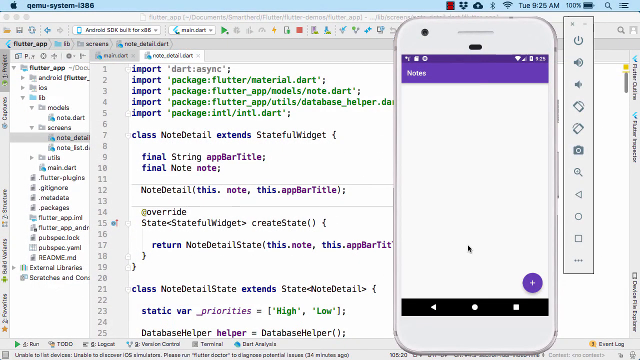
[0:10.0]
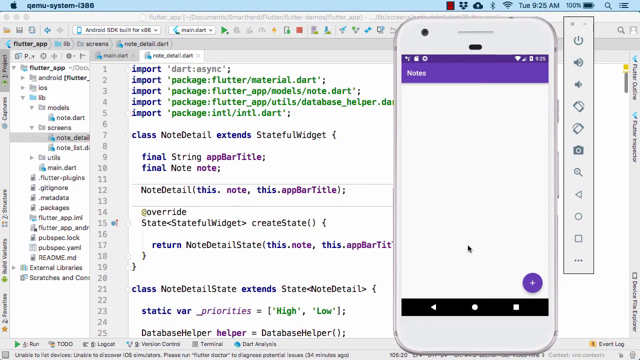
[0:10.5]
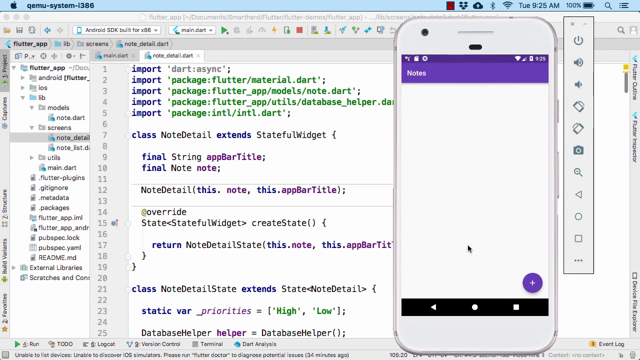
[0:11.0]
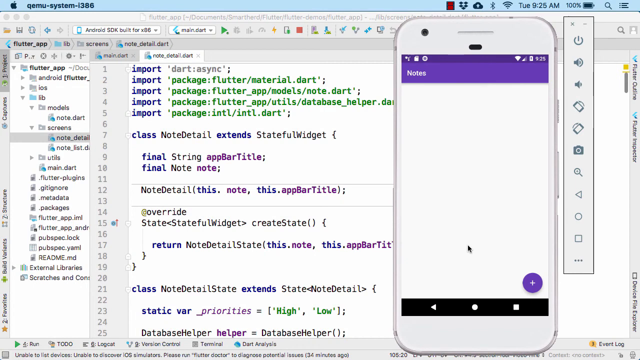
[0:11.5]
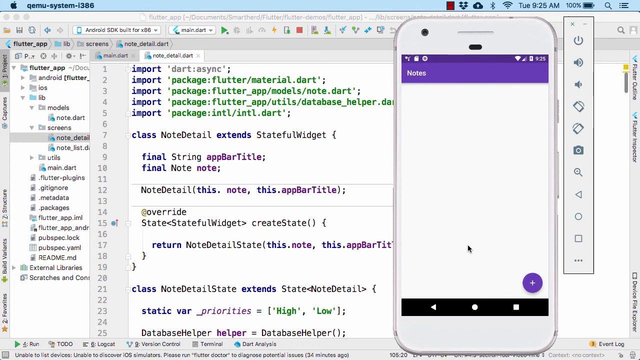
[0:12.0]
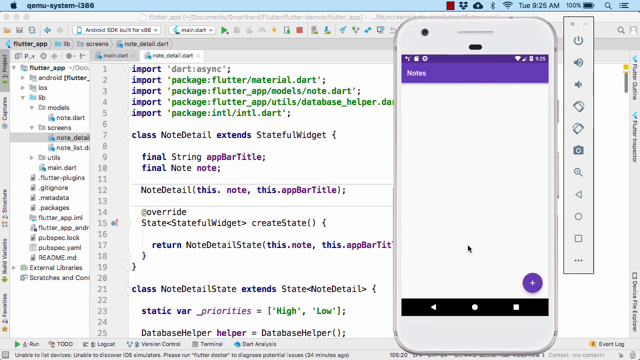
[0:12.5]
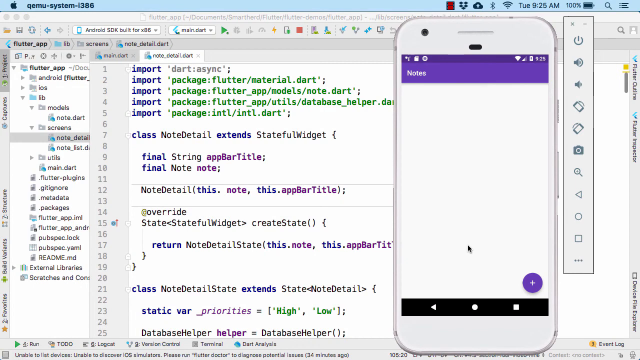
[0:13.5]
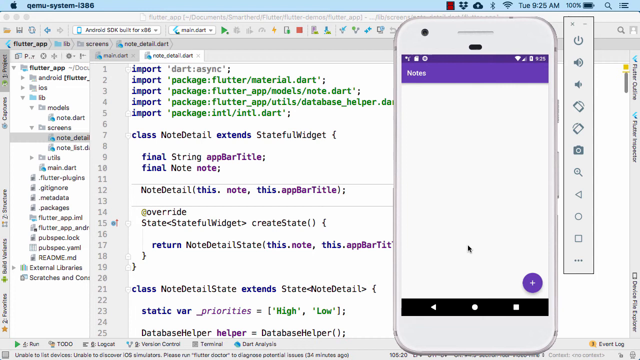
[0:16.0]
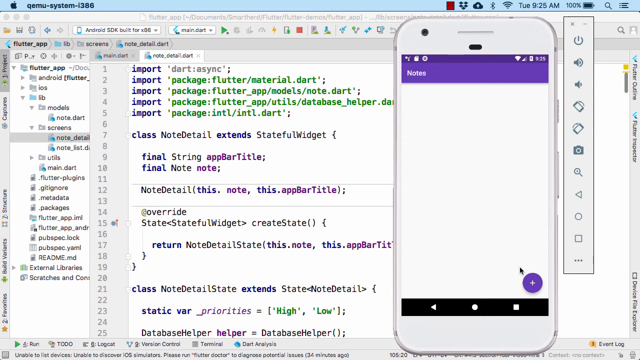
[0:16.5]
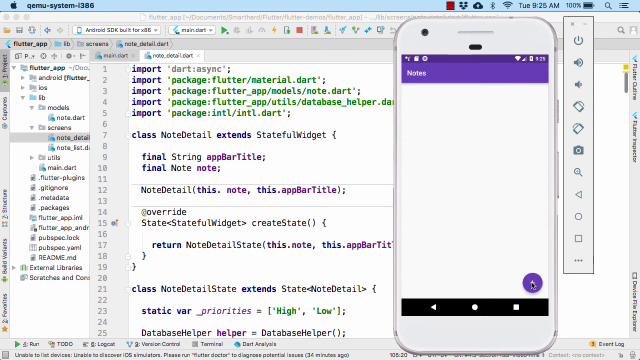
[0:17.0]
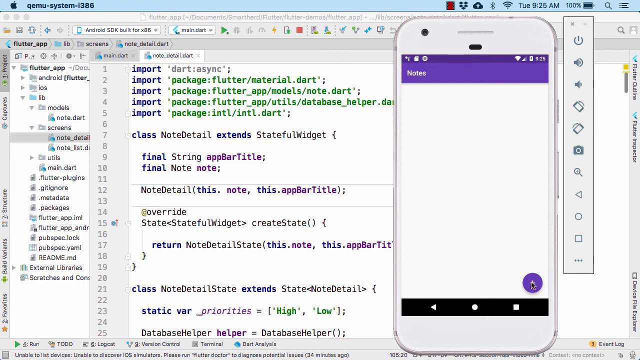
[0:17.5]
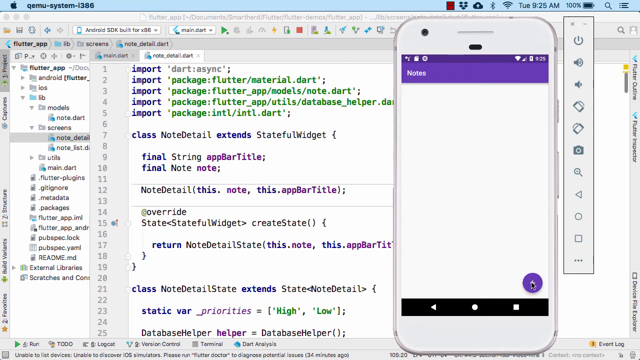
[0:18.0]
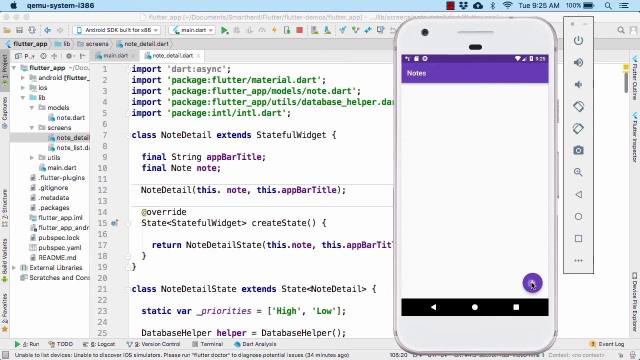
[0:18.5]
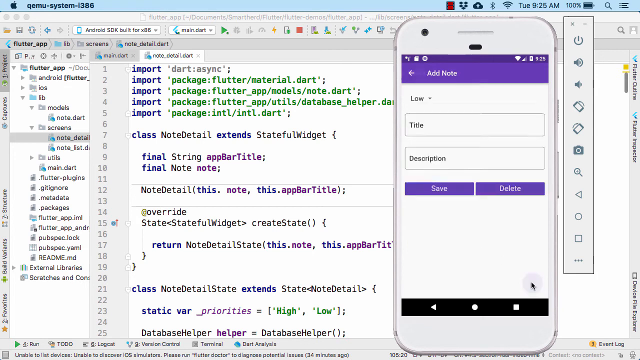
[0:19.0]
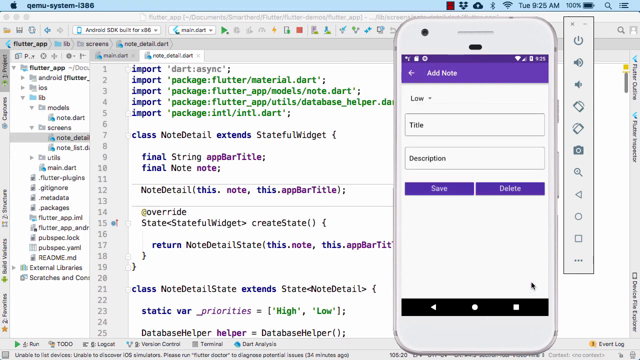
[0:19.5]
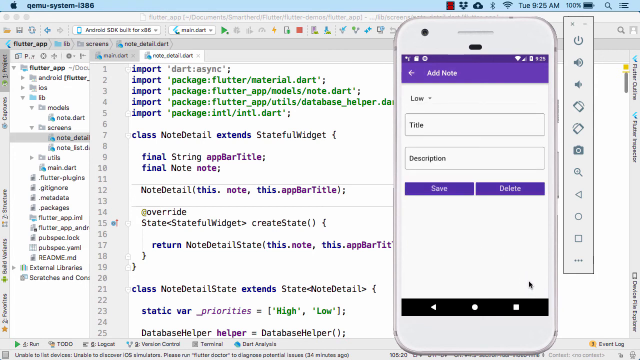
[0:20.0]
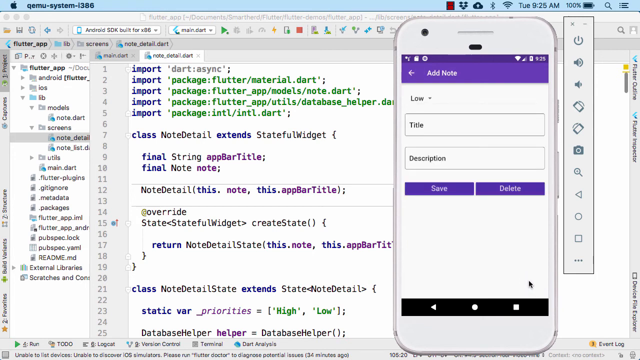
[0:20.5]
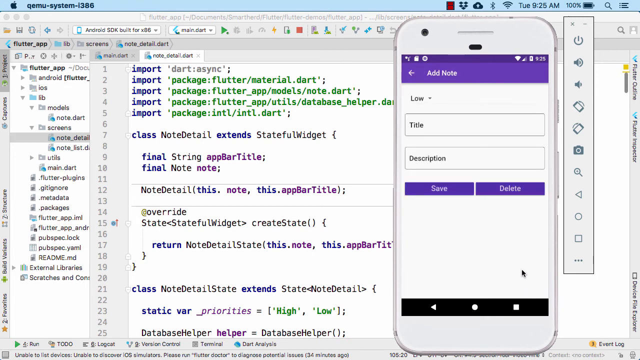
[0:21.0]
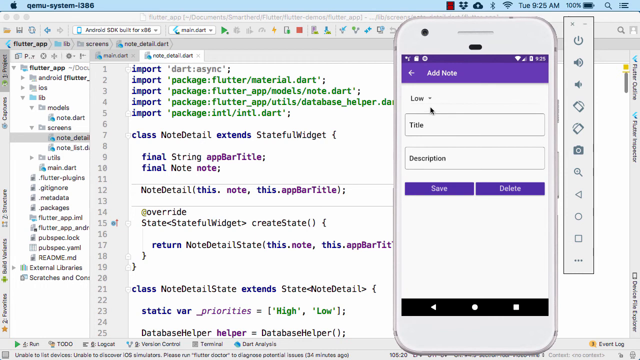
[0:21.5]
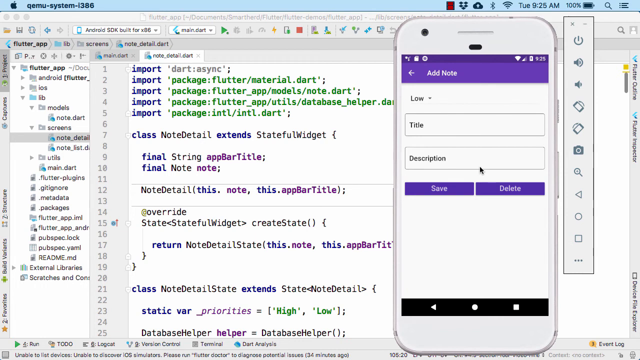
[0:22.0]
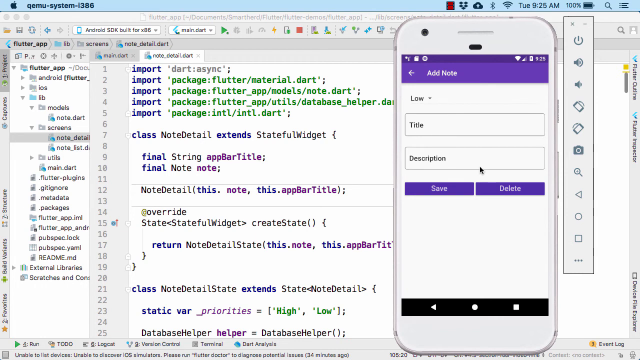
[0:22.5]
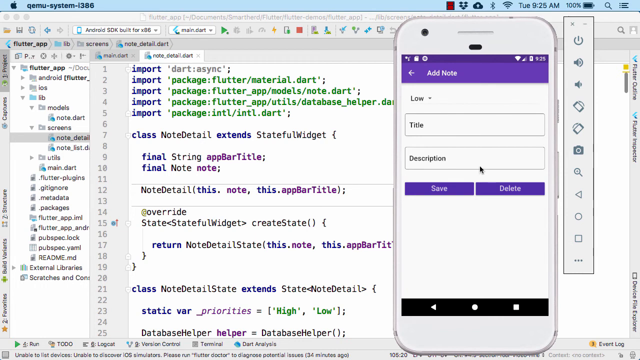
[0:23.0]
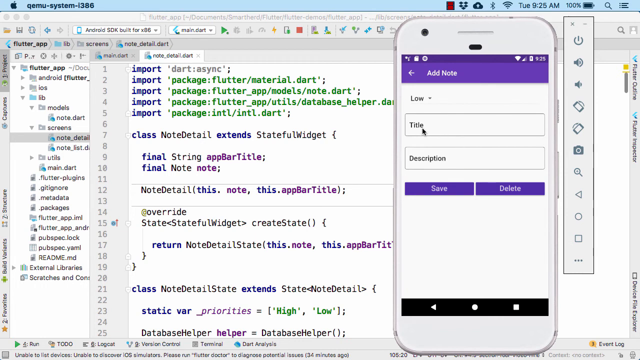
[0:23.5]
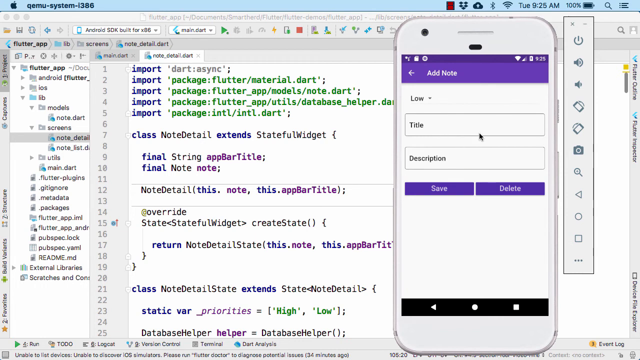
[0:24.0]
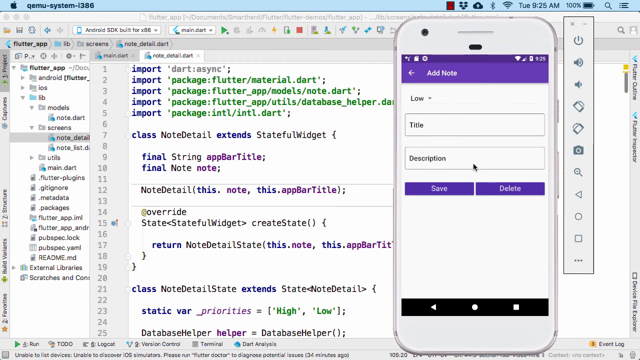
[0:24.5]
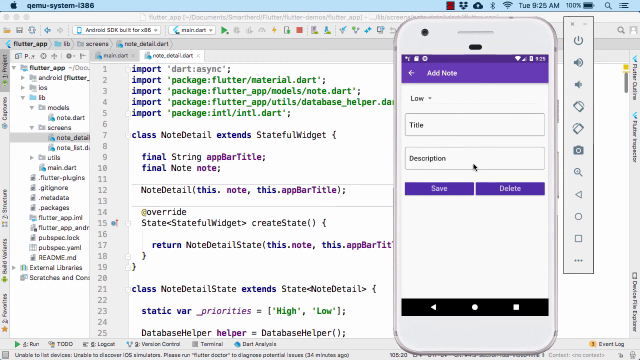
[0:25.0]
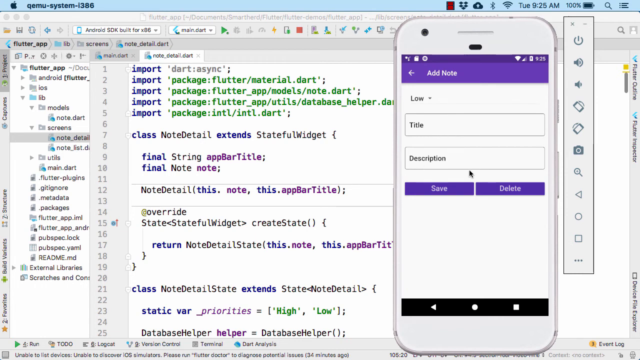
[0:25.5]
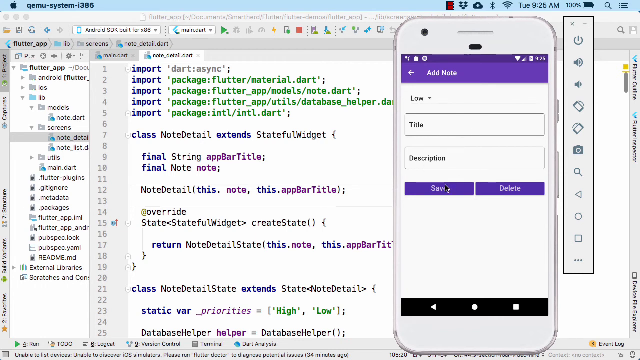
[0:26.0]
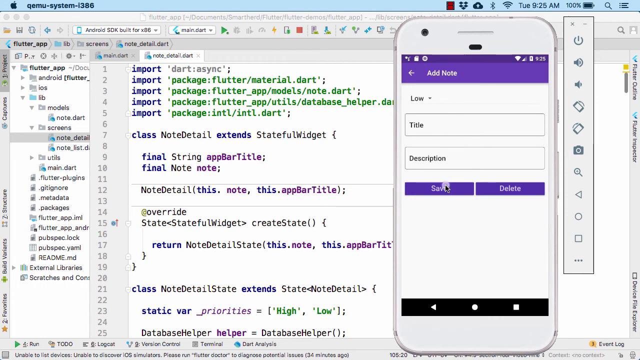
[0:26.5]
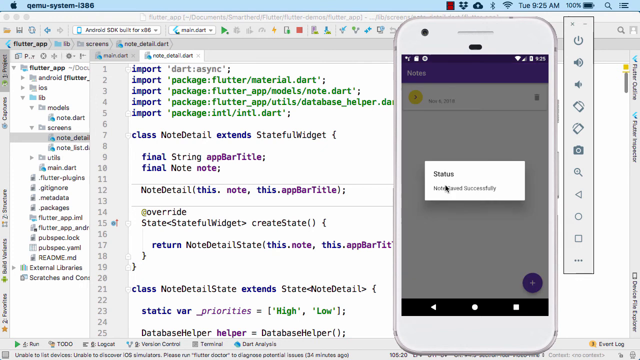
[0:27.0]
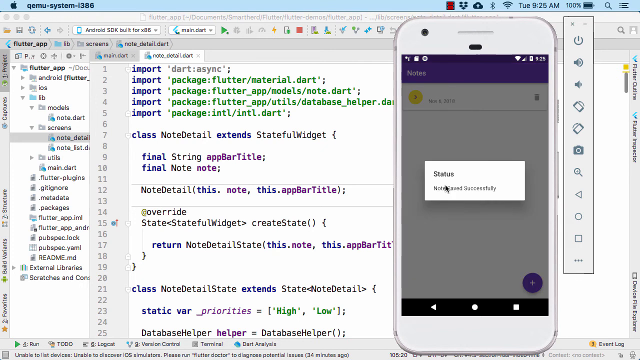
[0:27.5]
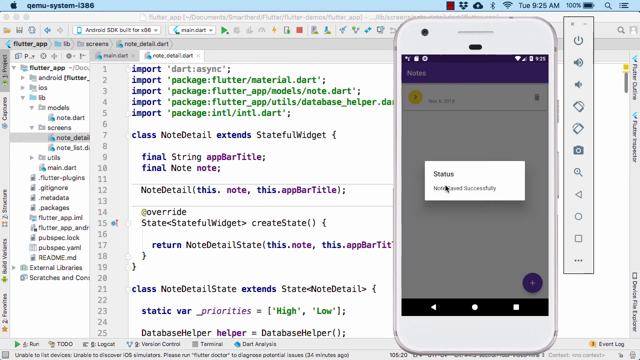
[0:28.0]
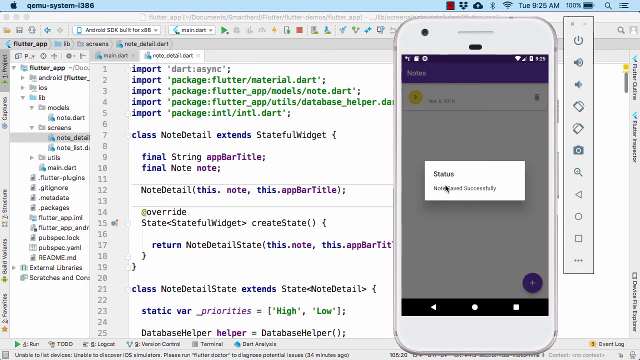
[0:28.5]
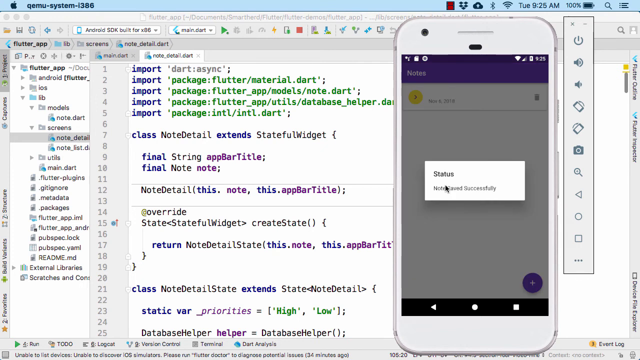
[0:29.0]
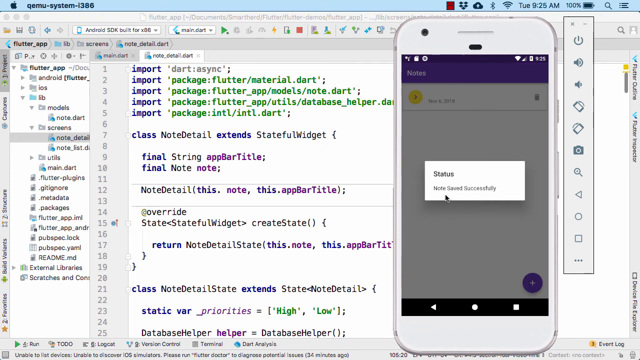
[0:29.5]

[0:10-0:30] In the finishing touches and conclusion portion, the screen loads and shows the phone while the person is apparently talking about notes. They create a new note, apparently using the plus button at the bottom right, which opens the add note screen. Nothing is typed in; the defaults are left as they are, the note is saved, and the message "note saved successfully" appears.